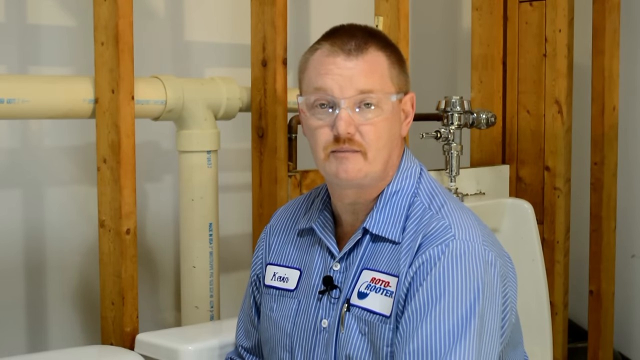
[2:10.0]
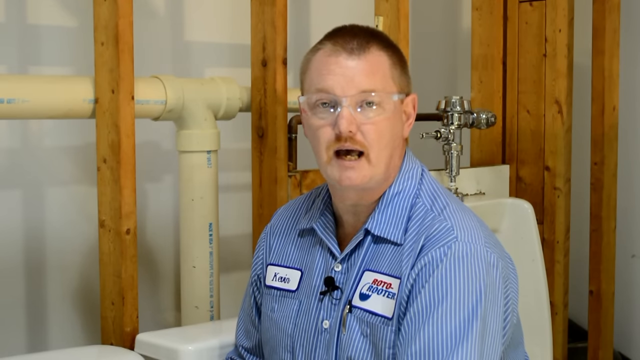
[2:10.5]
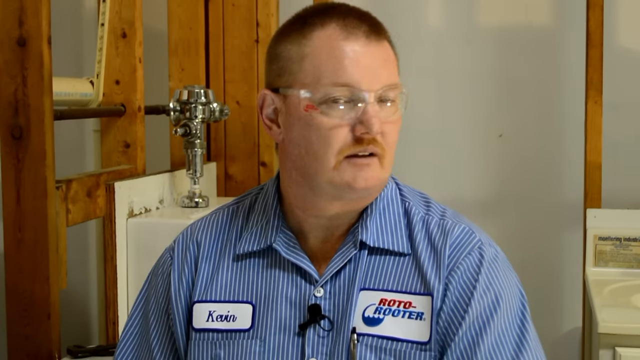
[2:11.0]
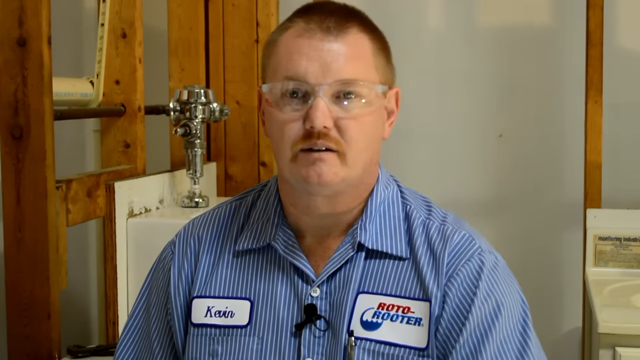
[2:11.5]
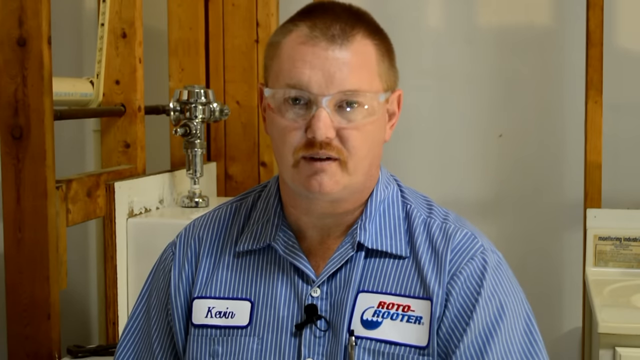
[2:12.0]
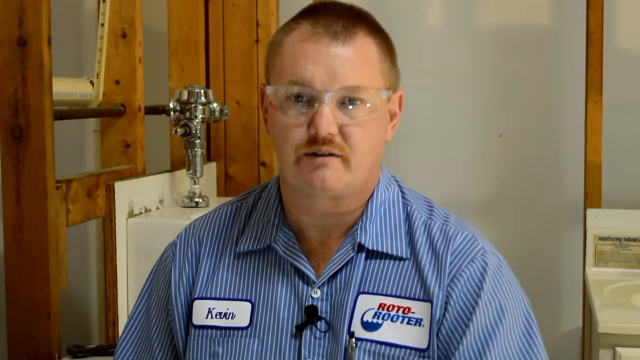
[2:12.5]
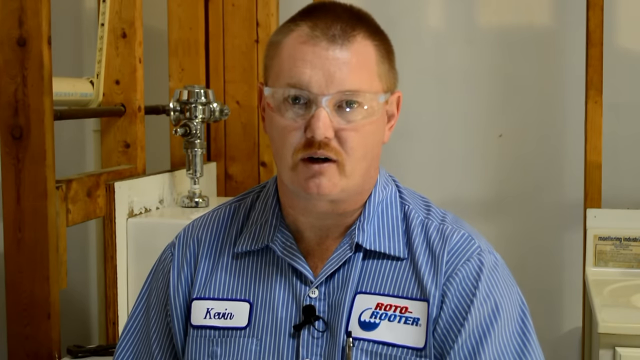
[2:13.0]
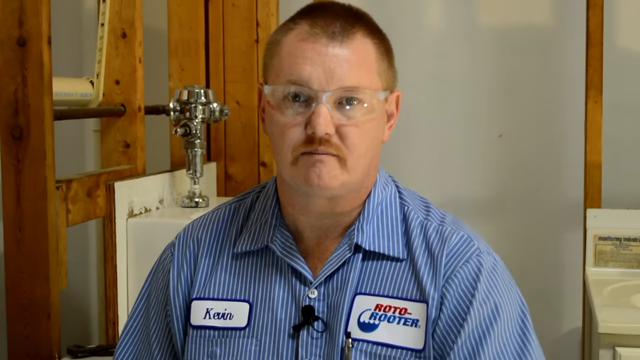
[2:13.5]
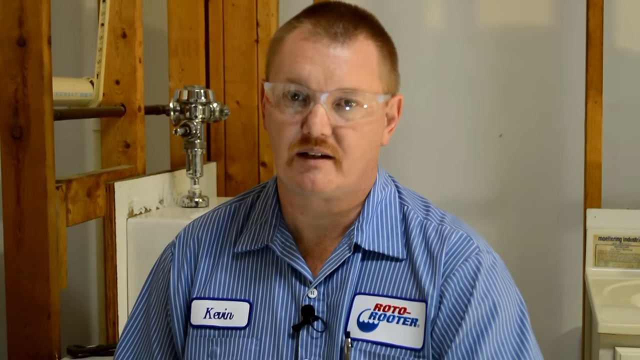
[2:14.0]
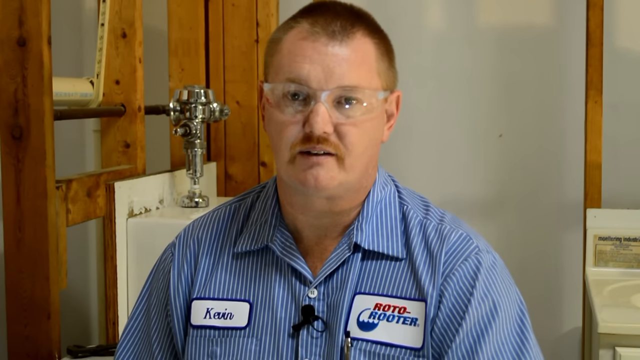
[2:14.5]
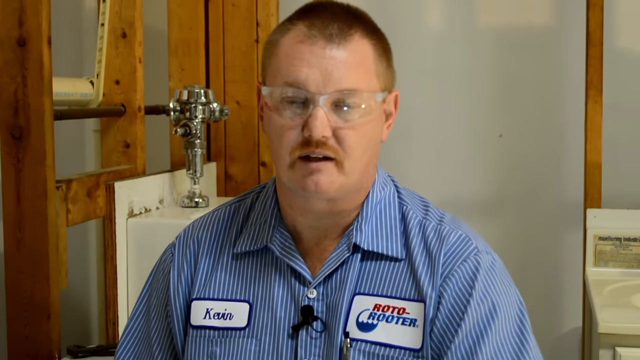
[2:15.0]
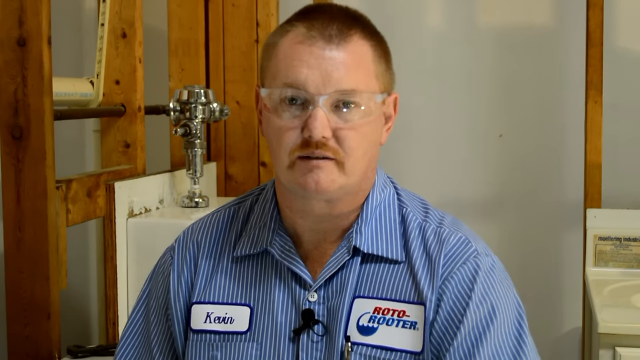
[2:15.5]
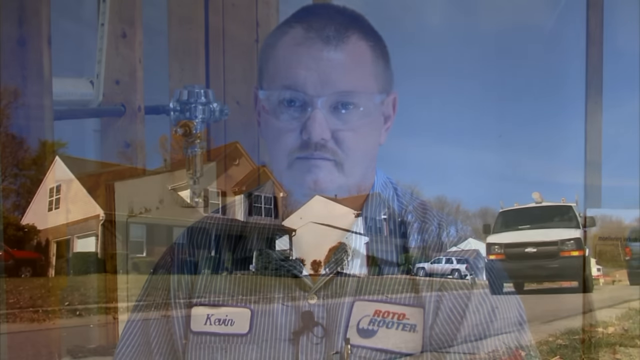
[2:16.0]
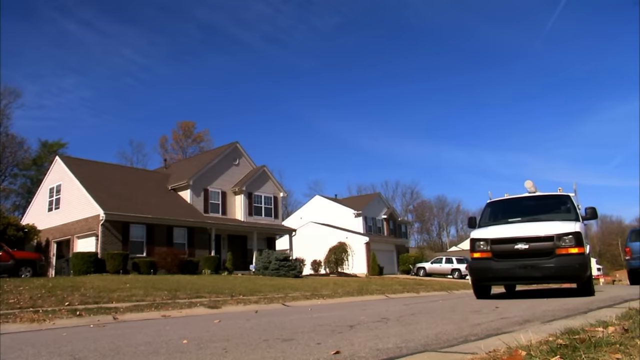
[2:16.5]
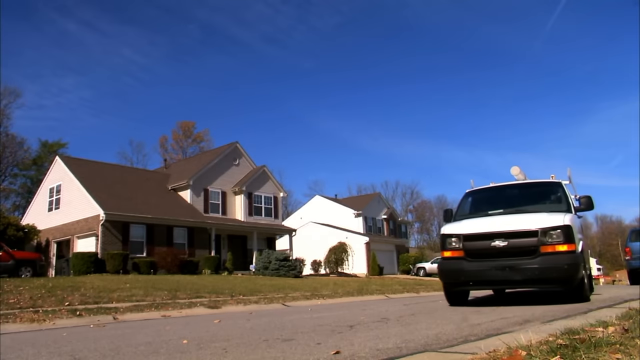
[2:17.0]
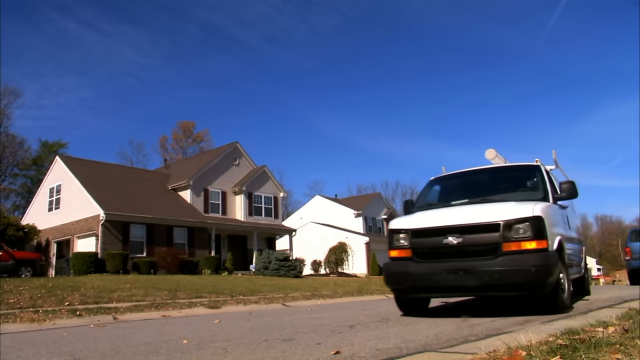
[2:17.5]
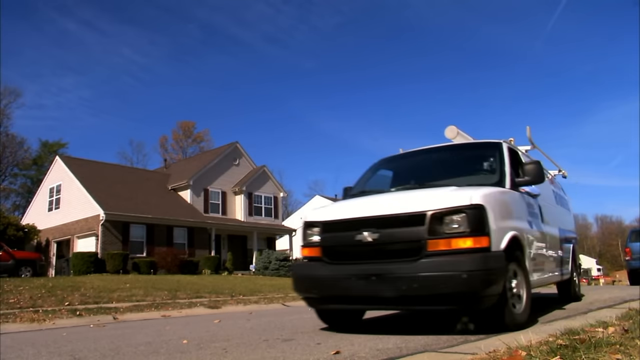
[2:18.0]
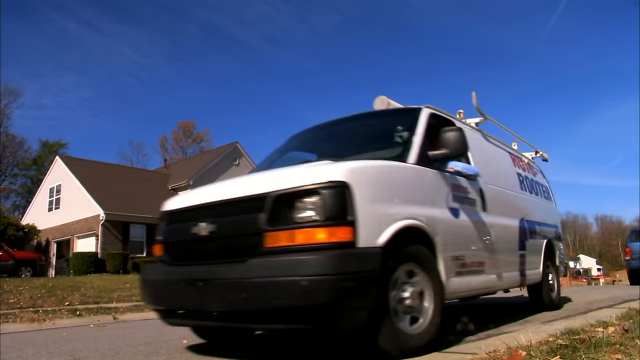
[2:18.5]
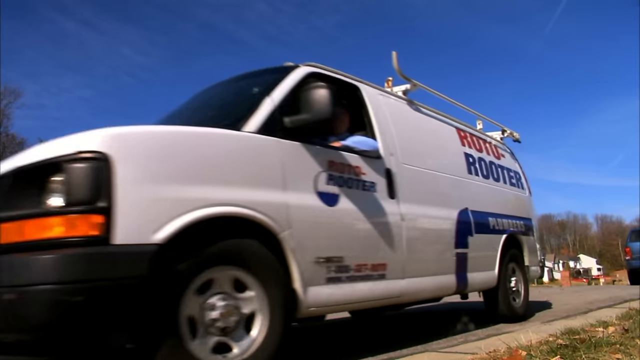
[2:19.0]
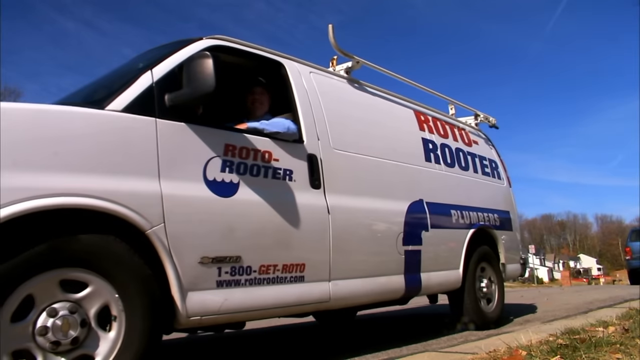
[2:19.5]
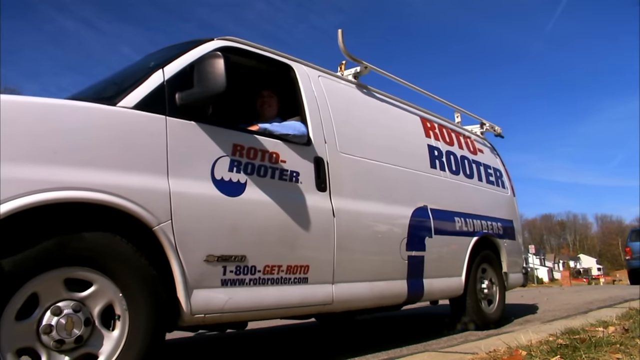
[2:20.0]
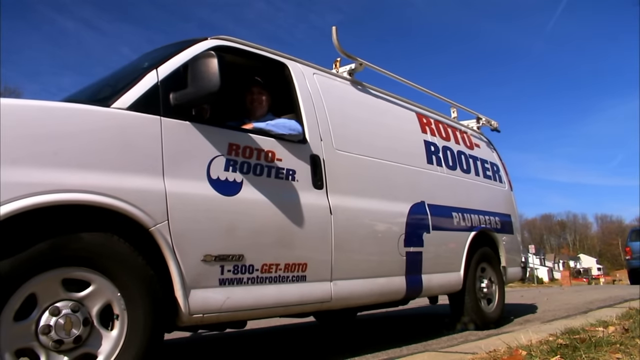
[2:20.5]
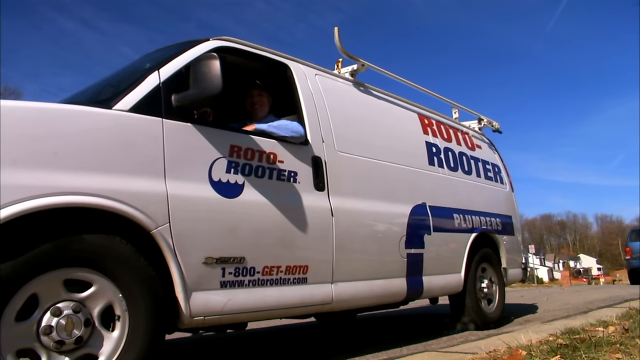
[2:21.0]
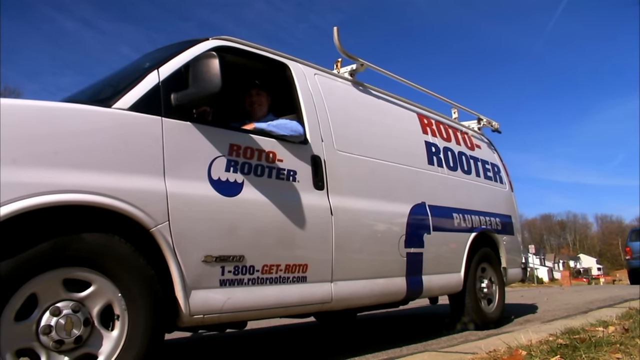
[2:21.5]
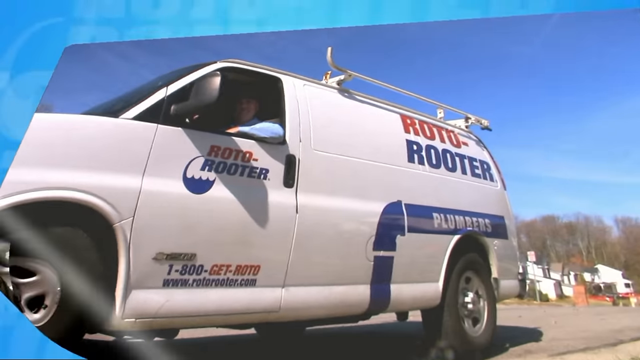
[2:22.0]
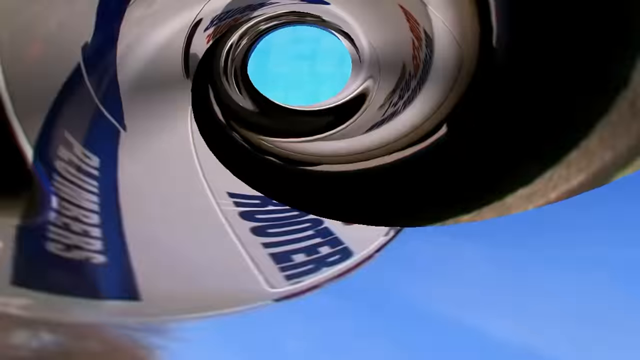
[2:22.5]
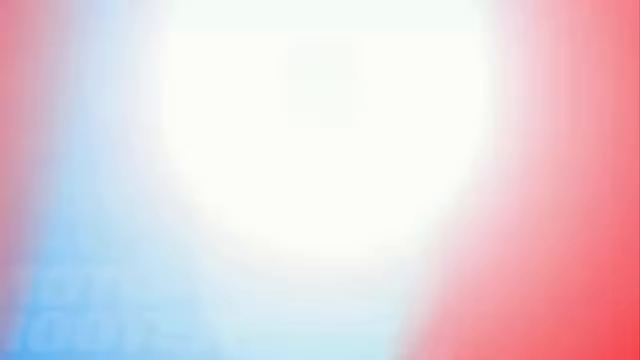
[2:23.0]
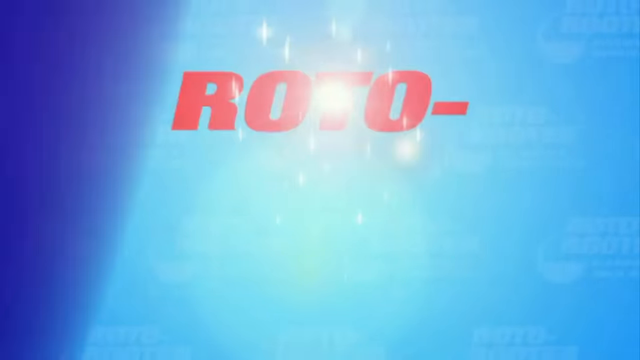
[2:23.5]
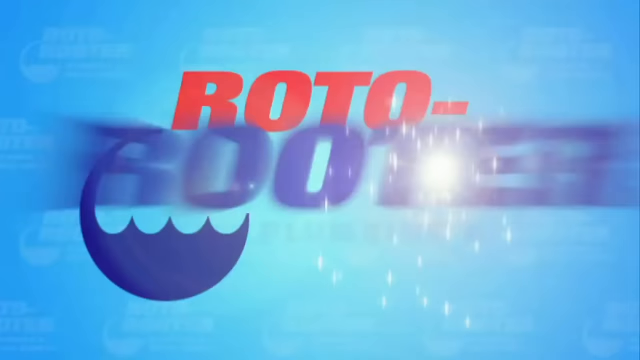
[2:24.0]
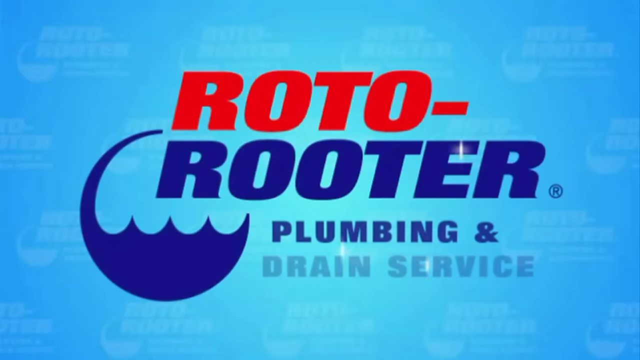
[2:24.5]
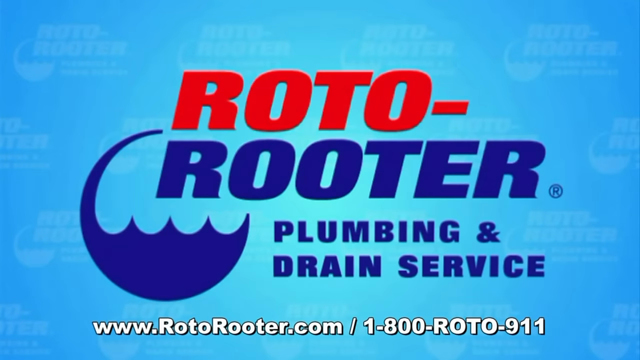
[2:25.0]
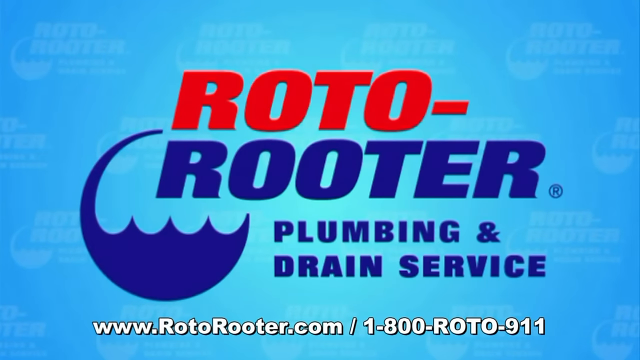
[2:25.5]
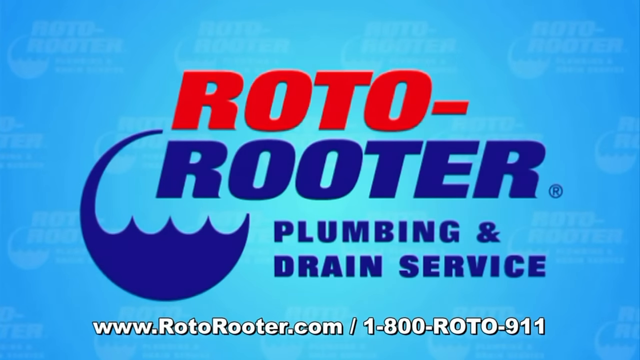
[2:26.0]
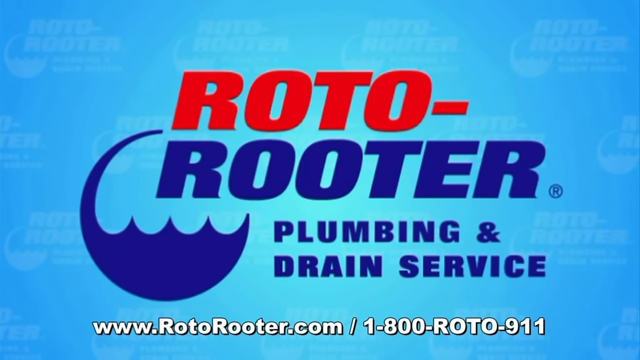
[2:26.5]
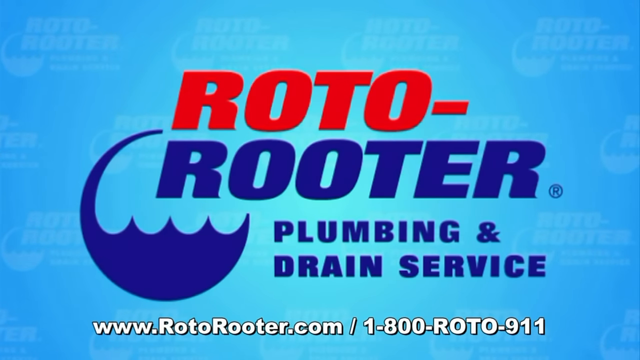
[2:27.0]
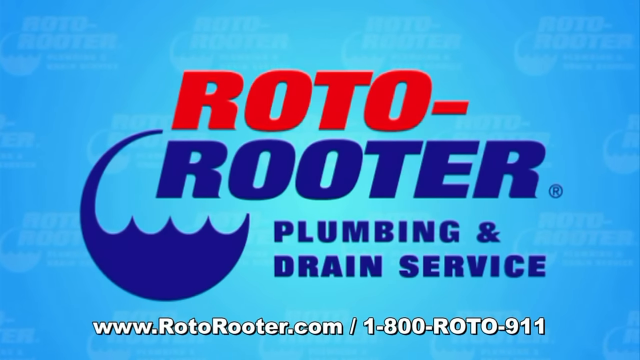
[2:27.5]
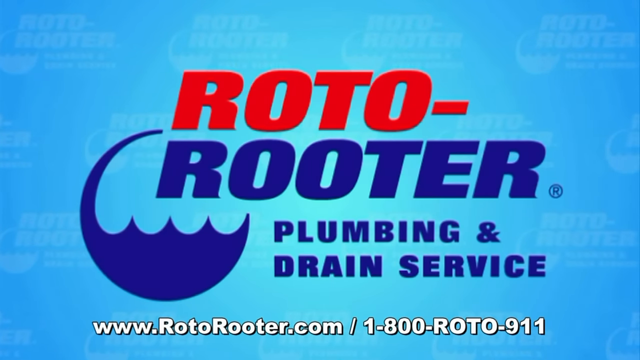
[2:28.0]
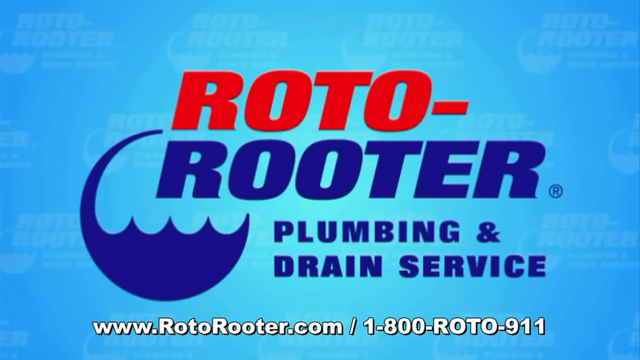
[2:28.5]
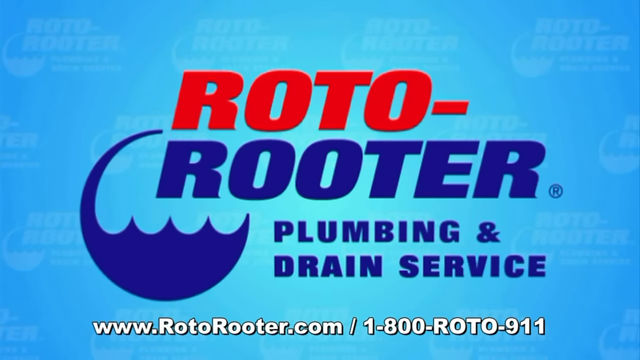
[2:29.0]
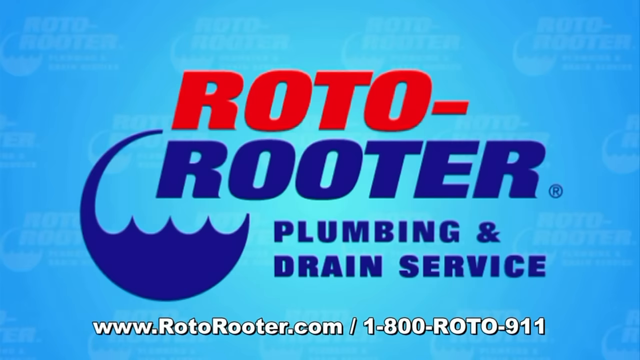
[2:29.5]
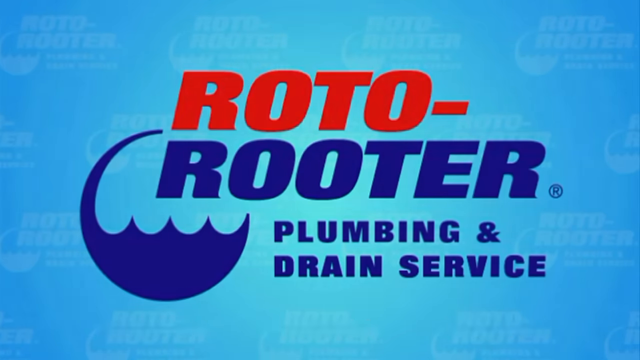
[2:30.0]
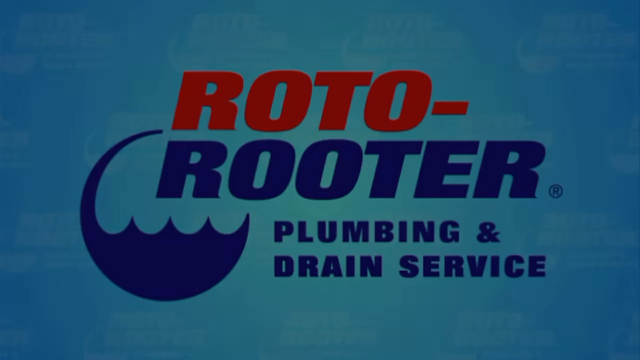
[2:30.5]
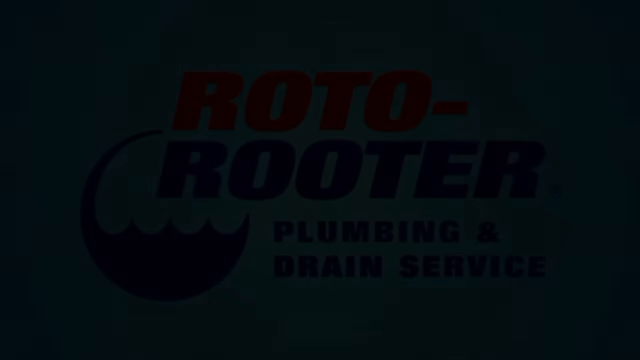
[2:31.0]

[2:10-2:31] The plumber is still talking to the camera. The perspective then changes so he is right in front of the camera, looking straight into it. In the background, the toilet with the special mechanism is on the left, and on the right is another white machine that cannot be clearly identified. The wood separation is still behind him. His name, "Kevin", appears on the left side of the screen. The scene then changes to an urban neighborhood, with a red car on the left and parked cars in the far back and on the right side of the screen. Detached two-story houses have fairly big yards in front and driveways leading to their garages. The plumber's car is then shown with the company name, Roto-Rooter, on its side, along with an email and a phone number. On the left of the car is the profession with a blue pipe design. Finally, the company's motto and logo are shown once again.